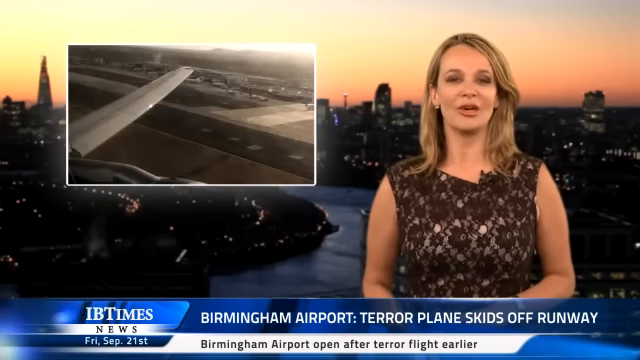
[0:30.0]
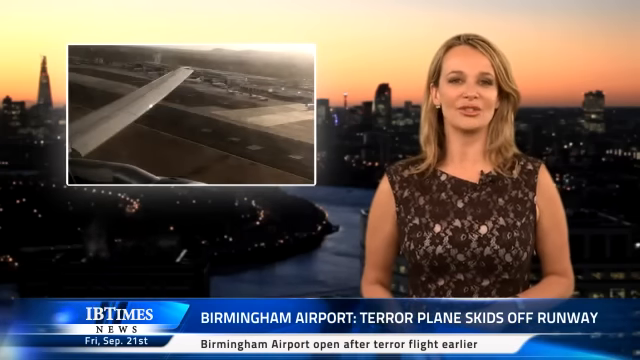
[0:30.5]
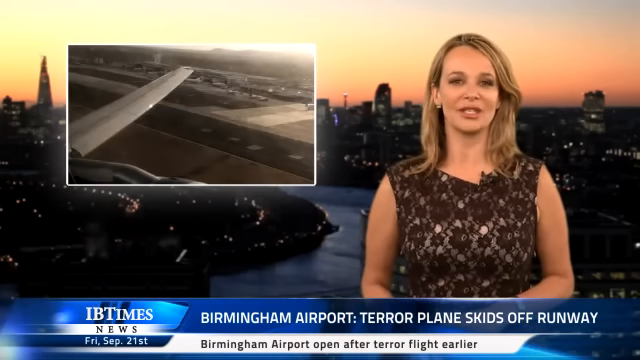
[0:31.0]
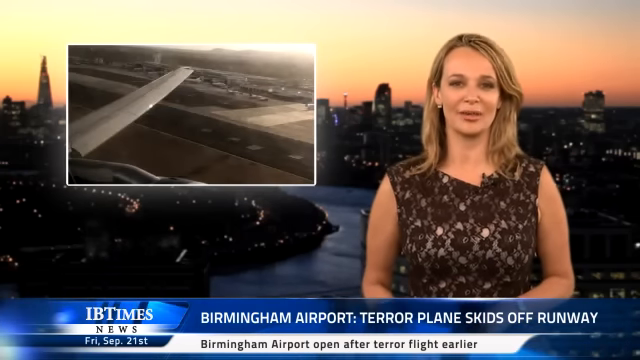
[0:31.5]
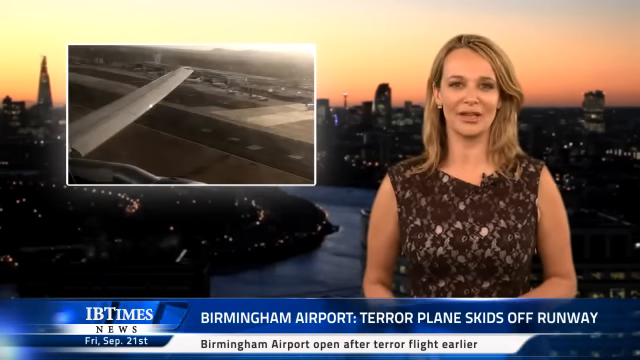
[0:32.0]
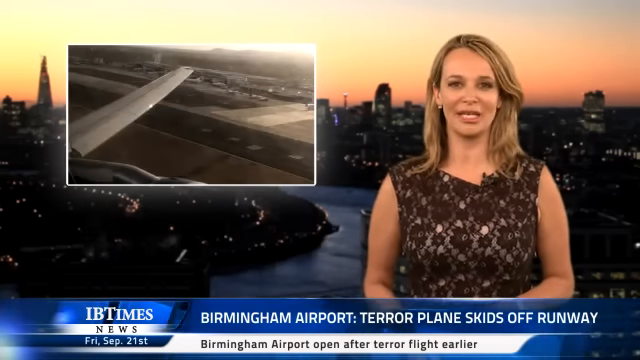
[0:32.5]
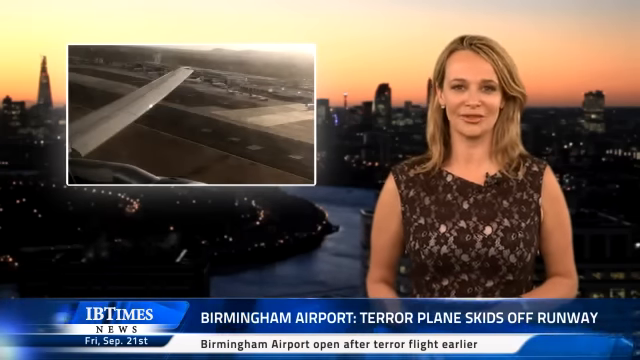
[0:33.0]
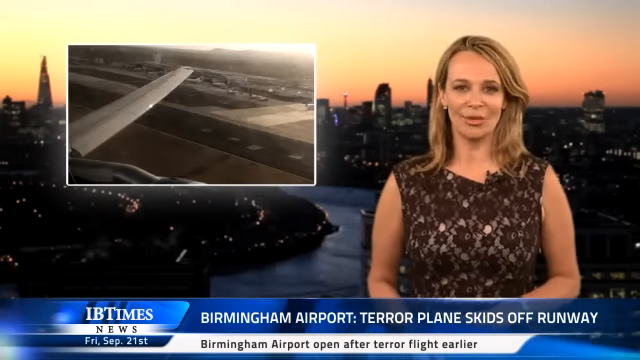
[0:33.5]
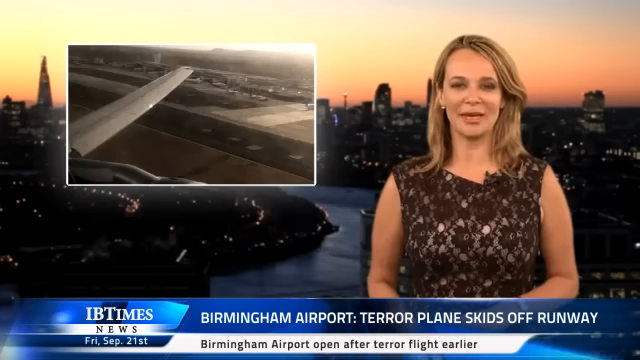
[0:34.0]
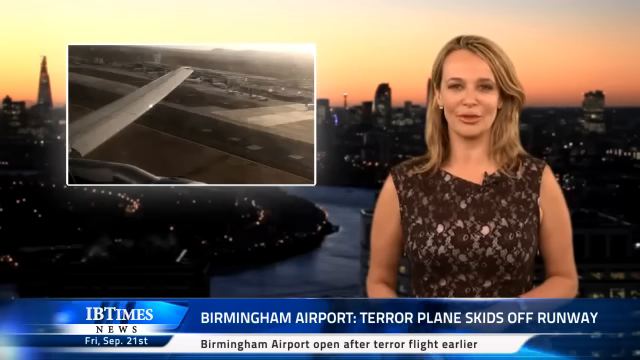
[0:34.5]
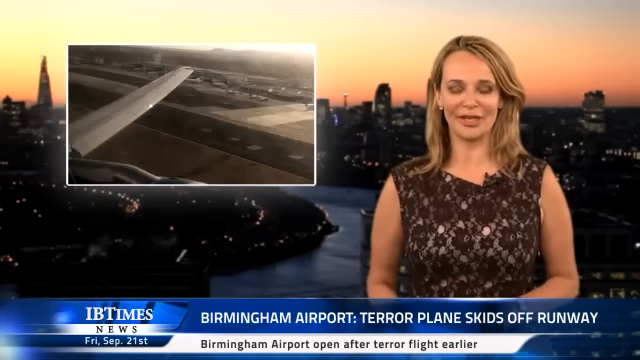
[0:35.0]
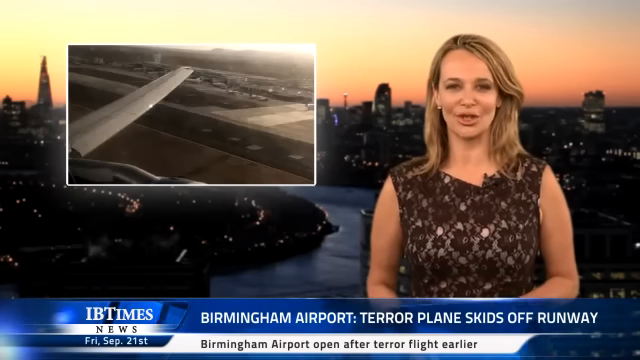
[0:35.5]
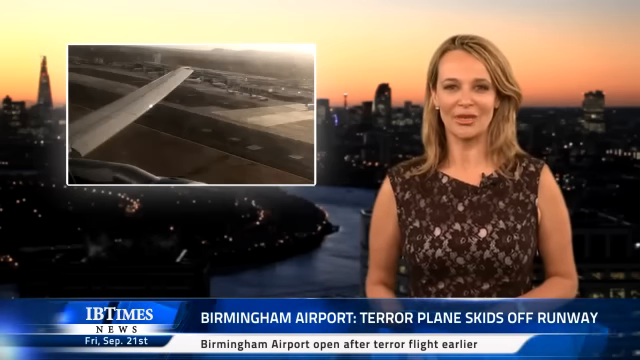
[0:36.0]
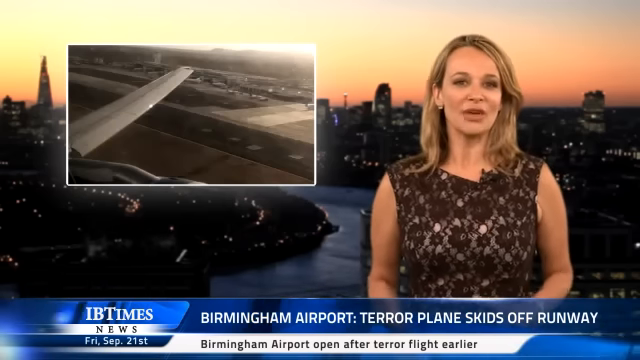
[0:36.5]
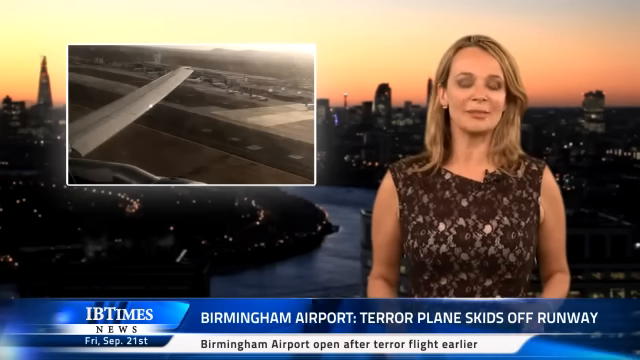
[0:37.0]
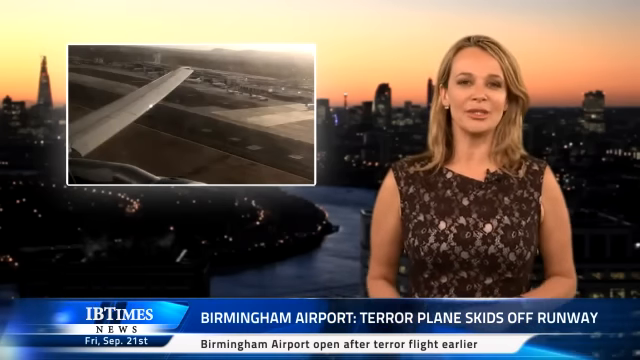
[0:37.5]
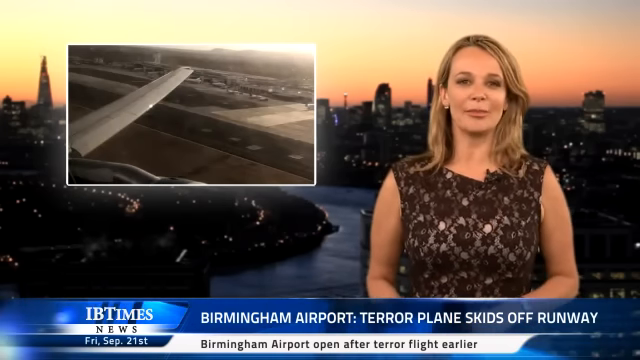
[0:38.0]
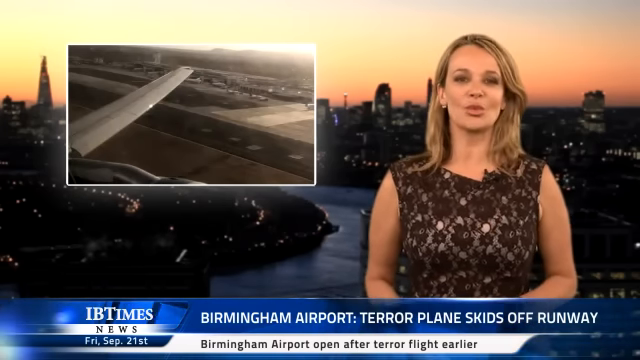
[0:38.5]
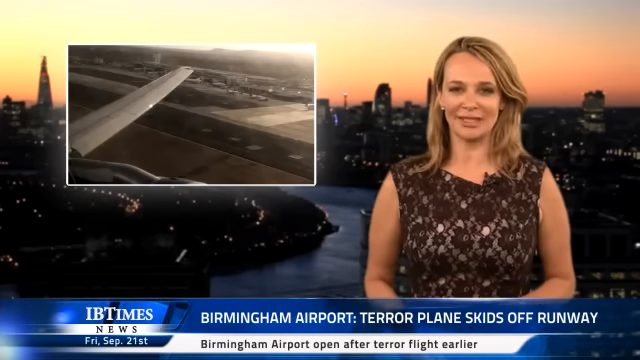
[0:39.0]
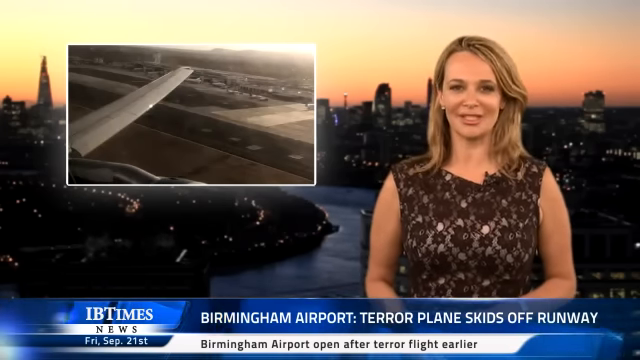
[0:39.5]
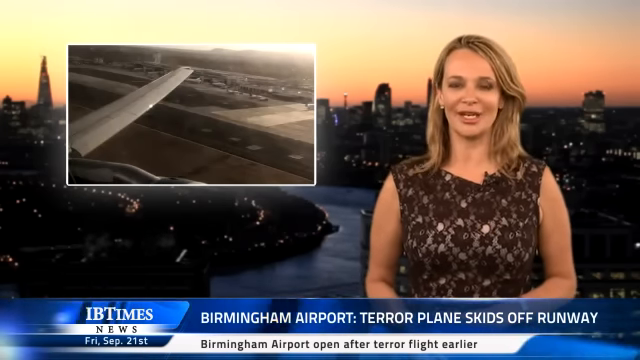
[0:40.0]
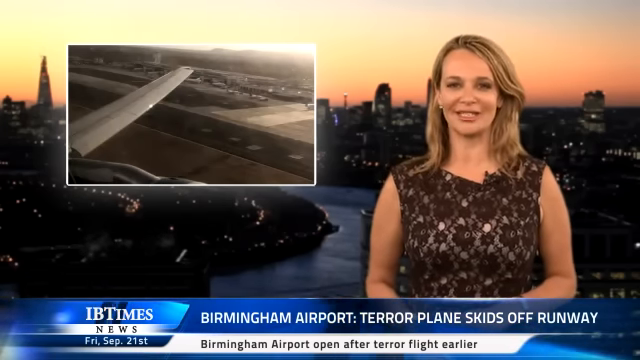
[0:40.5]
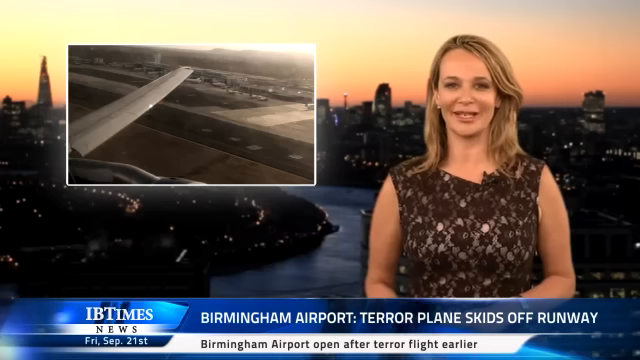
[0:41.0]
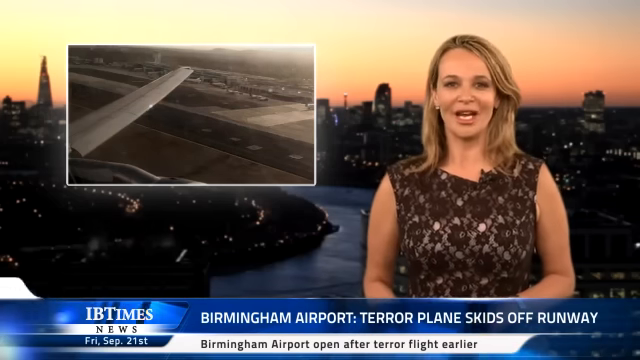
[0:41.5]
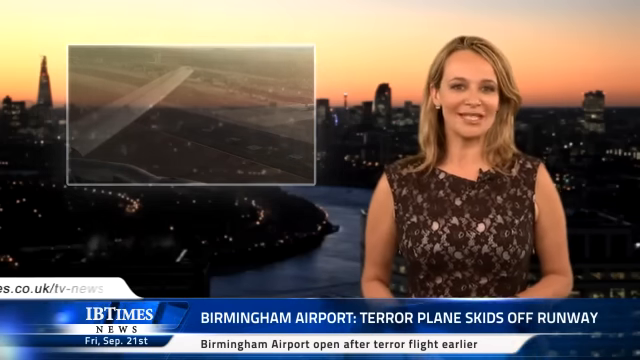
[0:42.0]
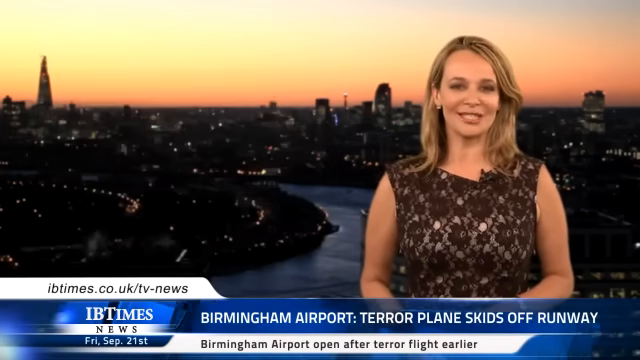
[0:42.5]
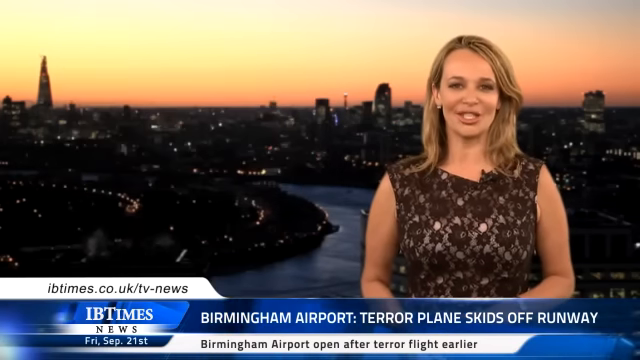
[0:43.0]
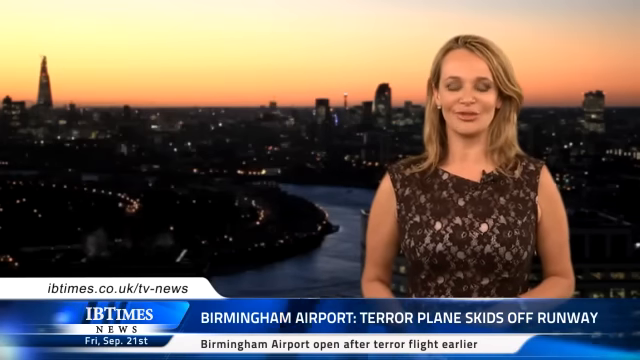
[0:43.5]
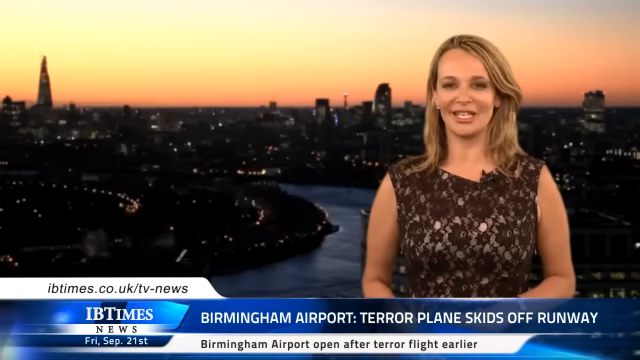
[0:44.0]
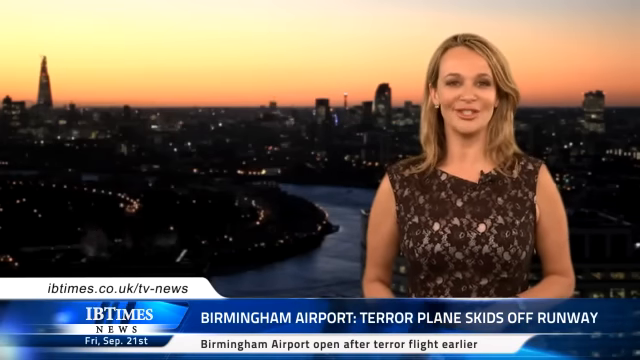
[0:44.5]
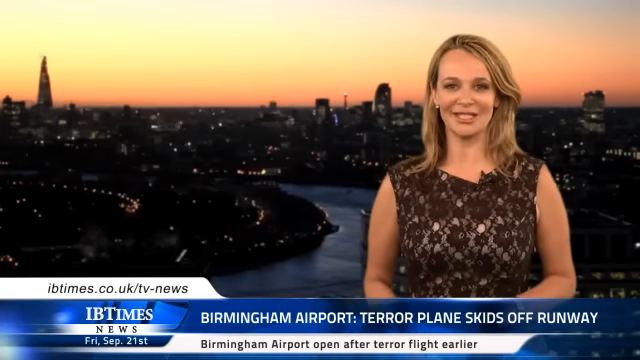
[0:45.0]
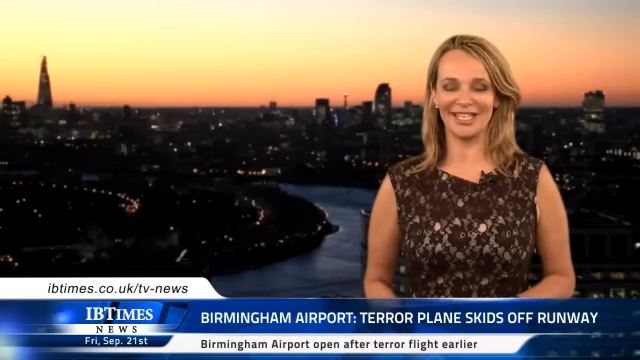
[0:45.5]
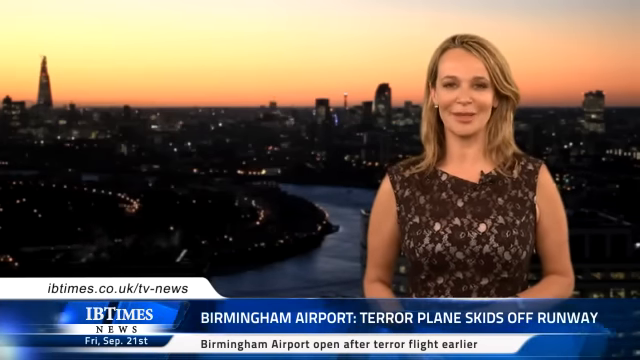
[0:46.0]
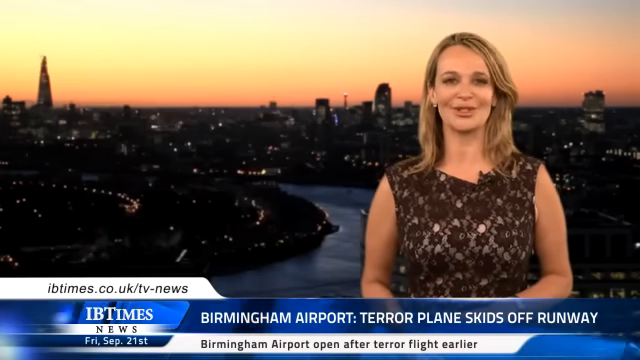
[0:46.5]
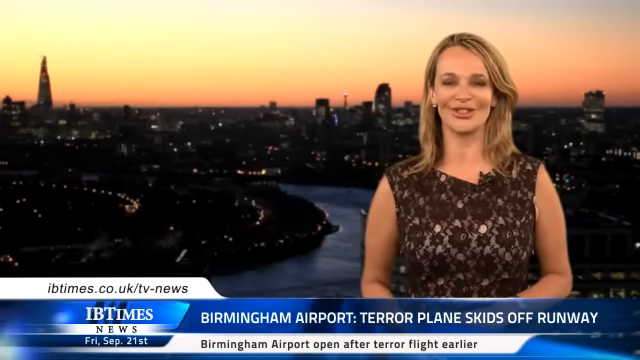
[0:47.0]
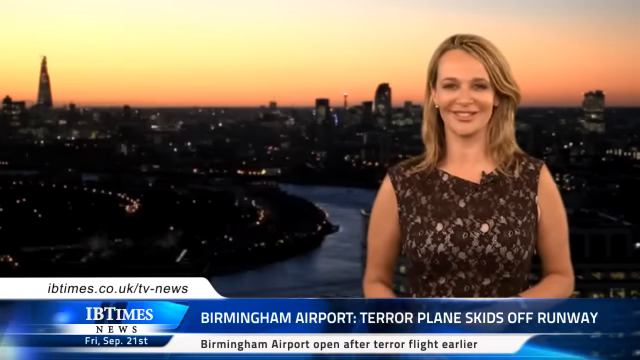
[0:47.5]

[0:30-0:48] The newscaster talks on the right side of the screen. She has blonde hair that goes down past her shoulders and wears a dark brown dress, and behind her, on a video screen, is the City of London, with its skyline and a river running through the middle of the city. On the left side of the screen is an image of an airplane wing, with the airport visible below it, to the left of the wing; it shows a passenger filming out of the airplane window, looking at the wing as the airplane flies over the airport off in the distance. The newscaster talks the entire time, looking directly at the camera and slightly animated in her facial movements. On the lower part of the screen the text reads "ibtimes.co.uk/tv news," and below that "IB Times News Friday, September 21st." The banner on the bottom of the screen reads "Birmingham Airport. Terror plane skids off runway." and below that "Birmingham Airport open after terror flight earlier." As the video ends, she smiles as she closes out her news segment.